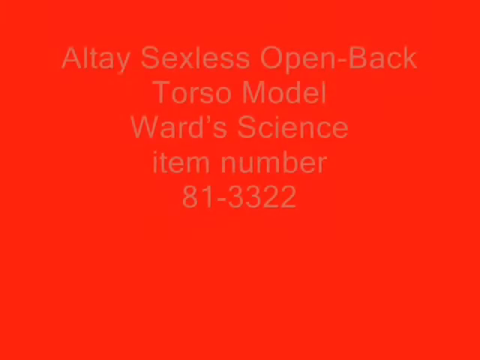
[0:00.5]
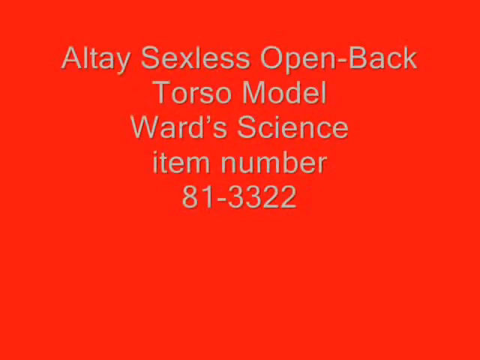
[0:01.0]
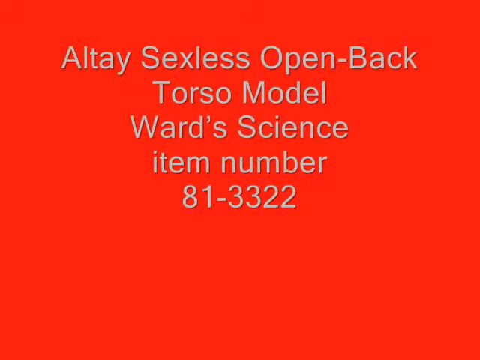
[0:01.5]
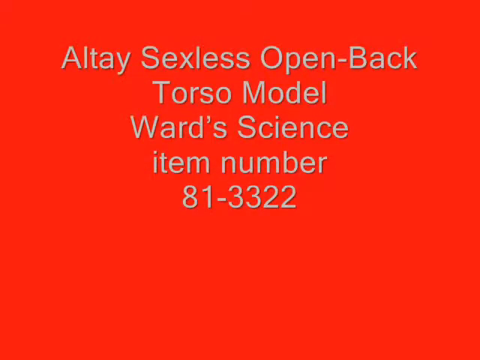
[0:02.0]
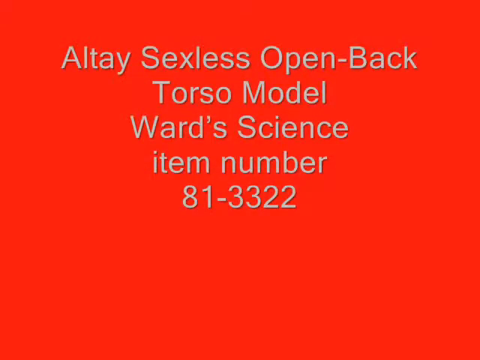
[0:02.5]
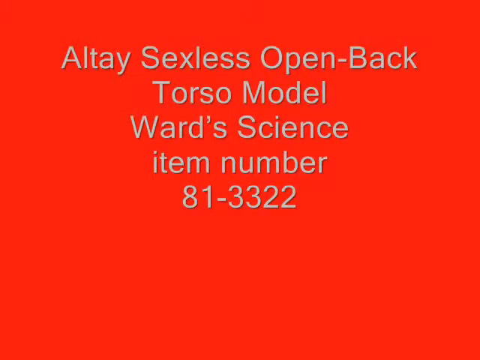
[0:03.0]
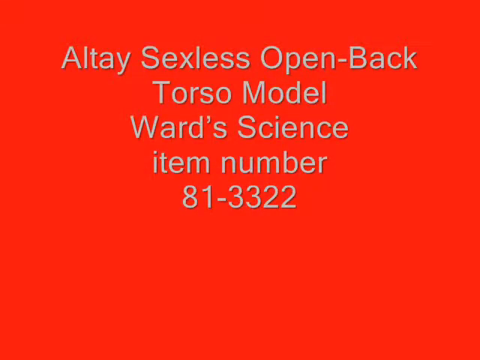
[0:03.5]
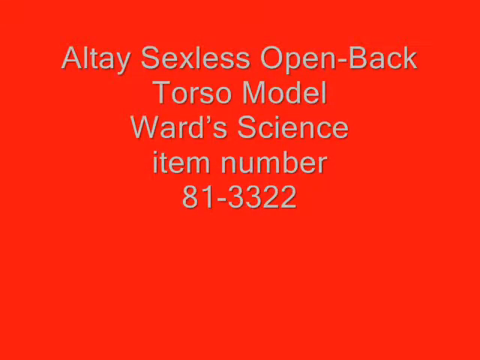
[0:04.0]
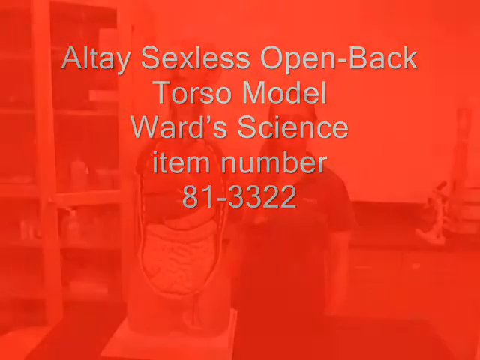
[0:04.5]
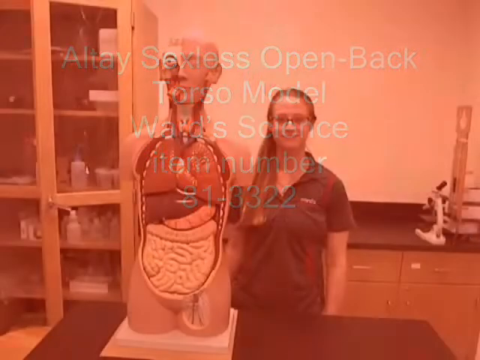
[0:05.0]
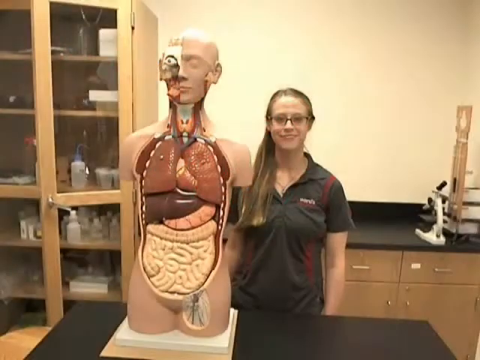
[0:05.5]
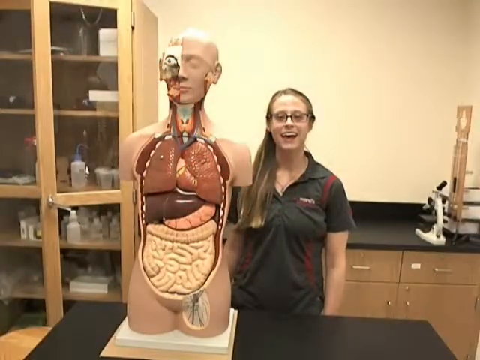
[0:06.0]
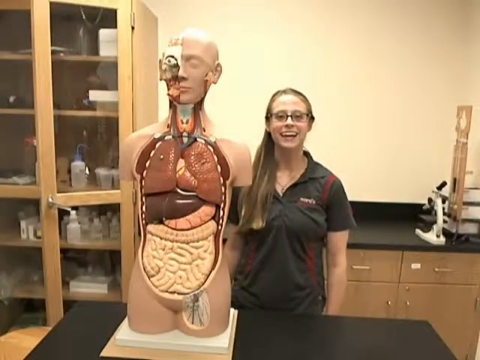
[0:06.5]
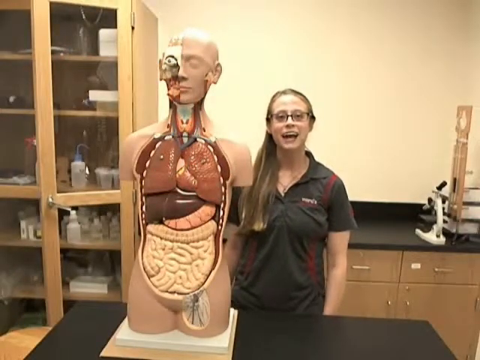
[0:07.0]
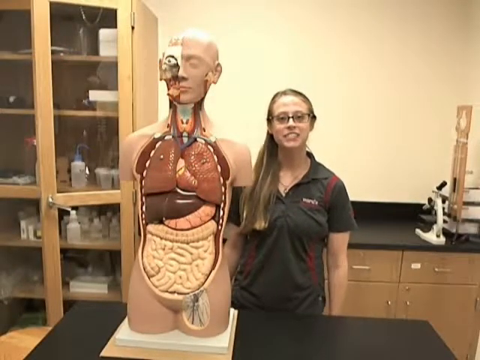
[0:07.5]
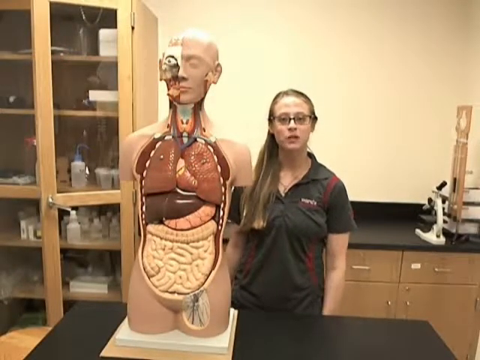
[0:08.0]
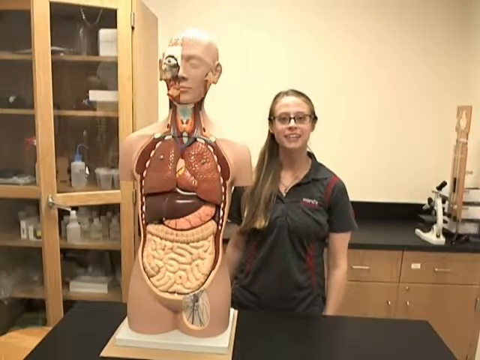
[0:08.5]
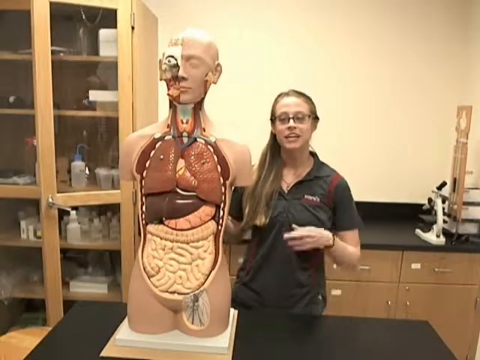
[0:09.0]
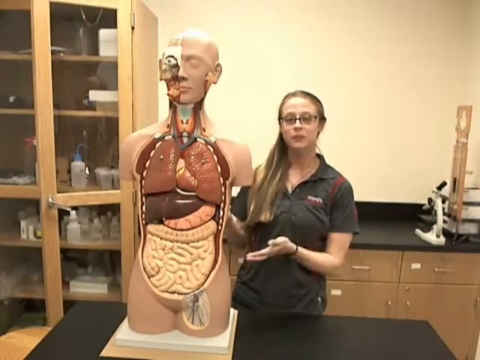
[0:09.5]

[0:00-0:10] A solid bright red screen appears with white text in a font with a slight shadow, placed just a little below the very top. The lines read "Alte Sexless Open Back", "Torso Model", "Wards Science", "Item Number" and "81-3322". The video then transitions to a young lady standing inside a room that looks a lot like a laboratory or medical clinical setting of some kind. The wall behind her is a yellowish cream colour. She is smiling and very friendly. She is standing next to a model of a human head and torso; the model, or dummy, has no arms or legs.